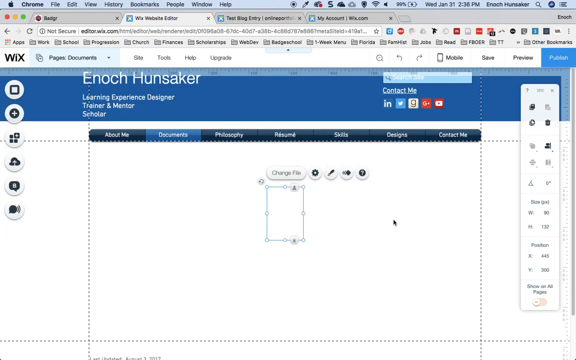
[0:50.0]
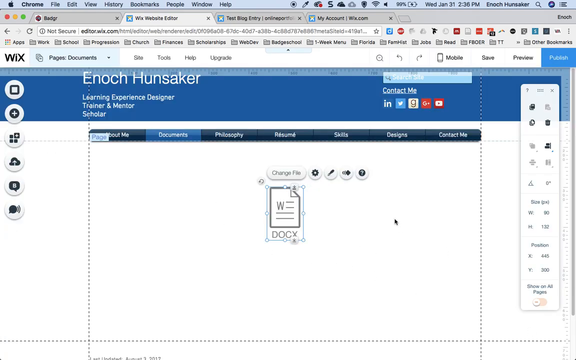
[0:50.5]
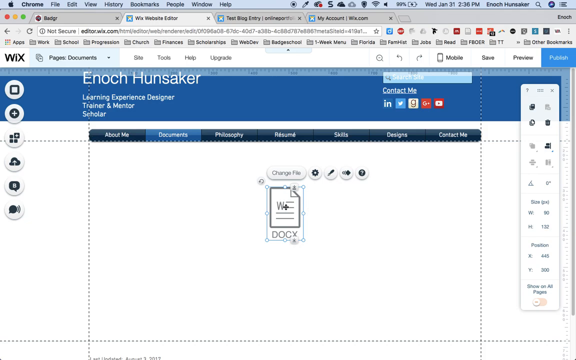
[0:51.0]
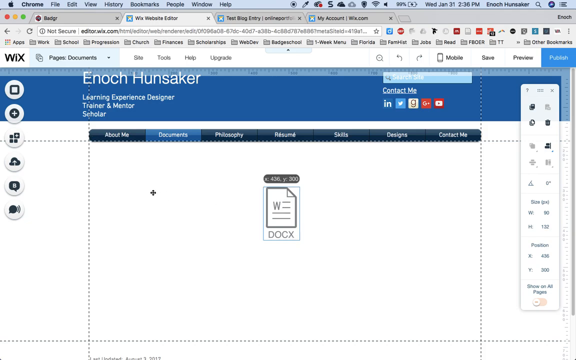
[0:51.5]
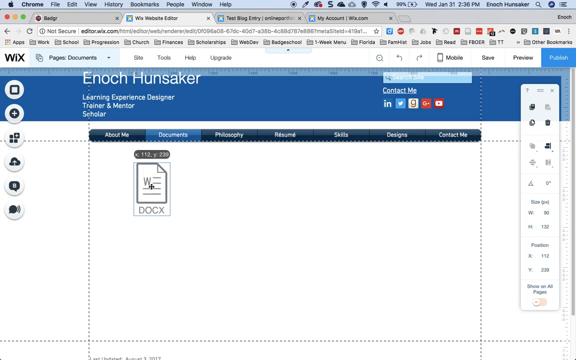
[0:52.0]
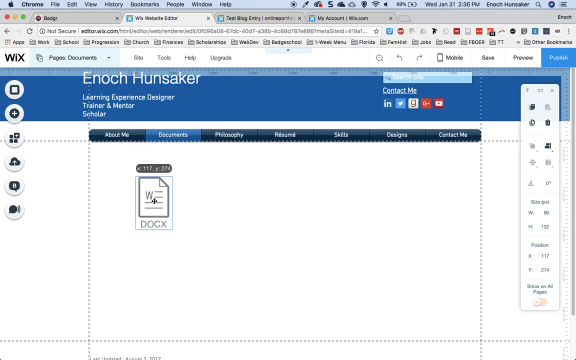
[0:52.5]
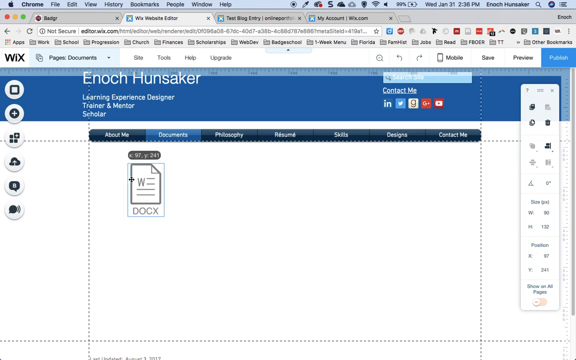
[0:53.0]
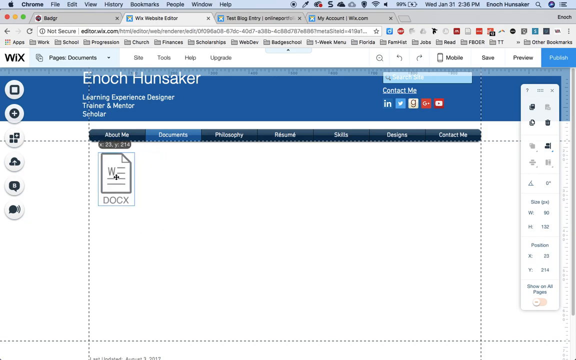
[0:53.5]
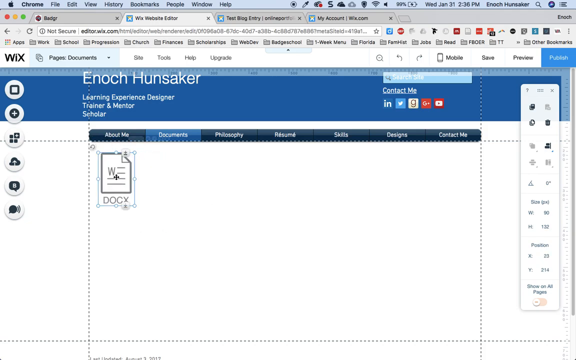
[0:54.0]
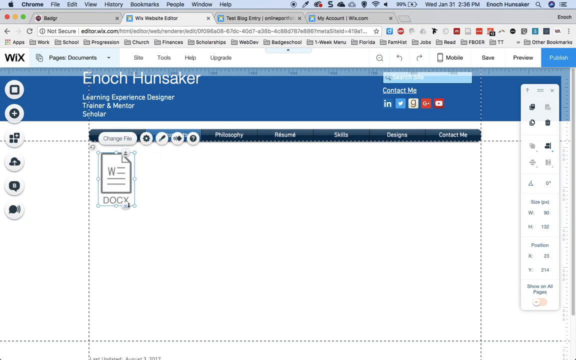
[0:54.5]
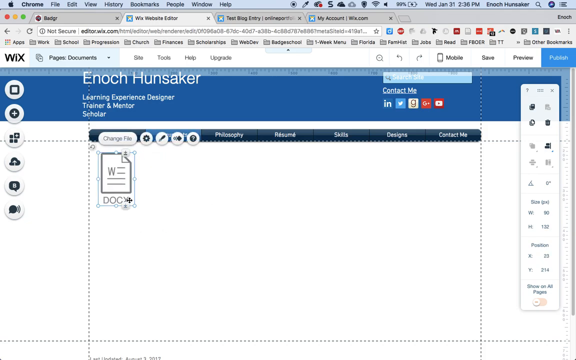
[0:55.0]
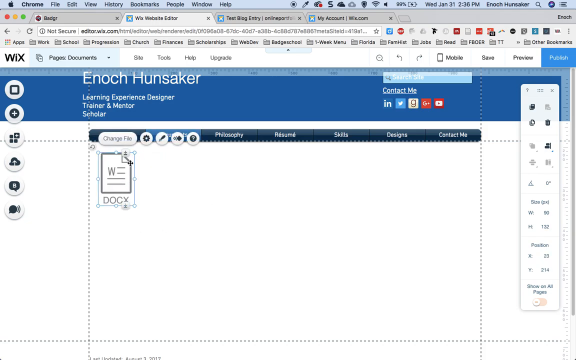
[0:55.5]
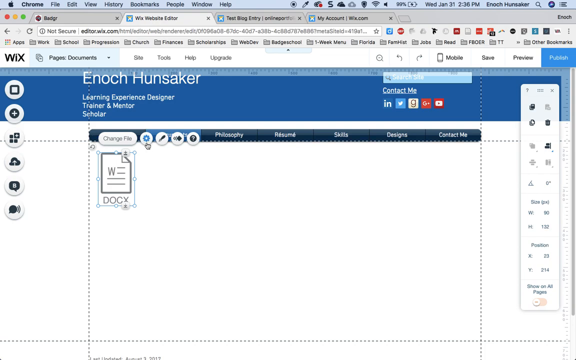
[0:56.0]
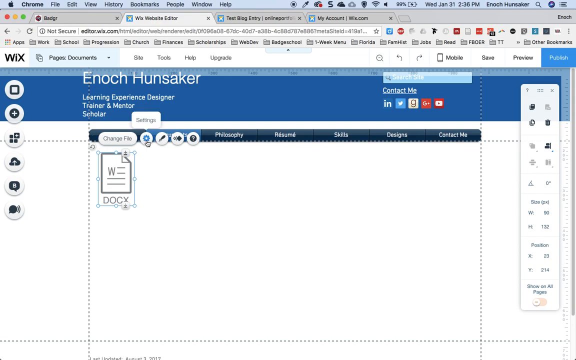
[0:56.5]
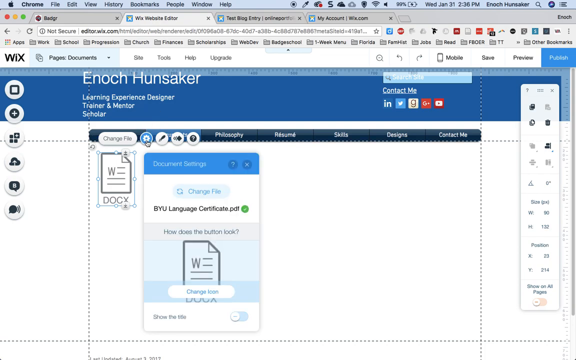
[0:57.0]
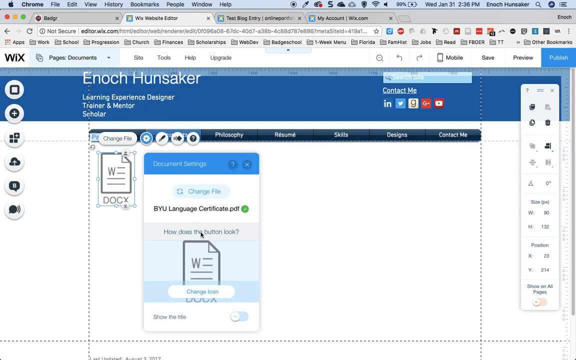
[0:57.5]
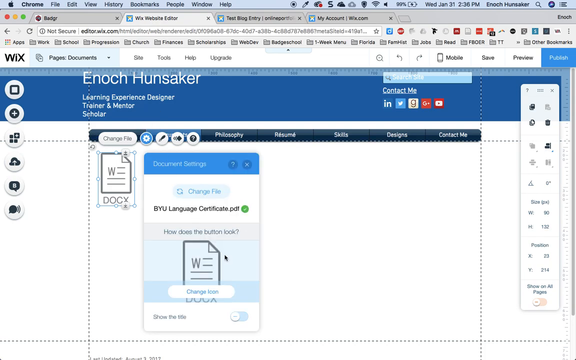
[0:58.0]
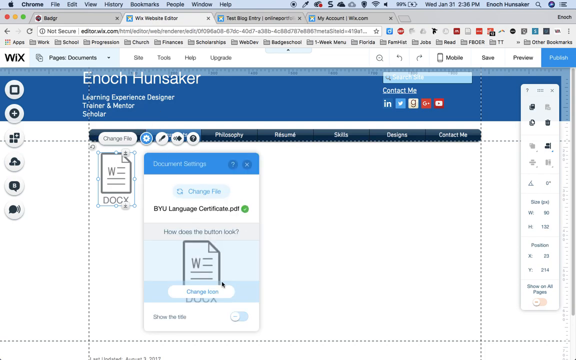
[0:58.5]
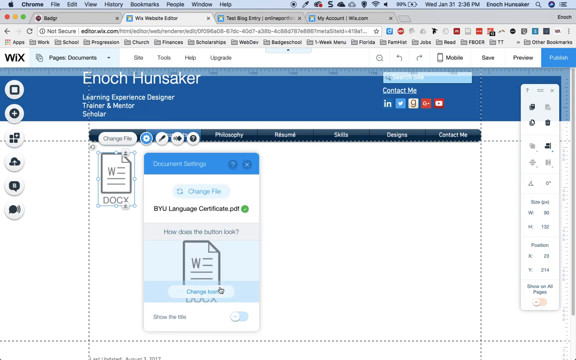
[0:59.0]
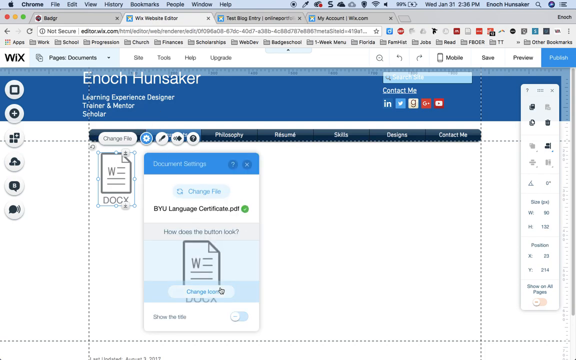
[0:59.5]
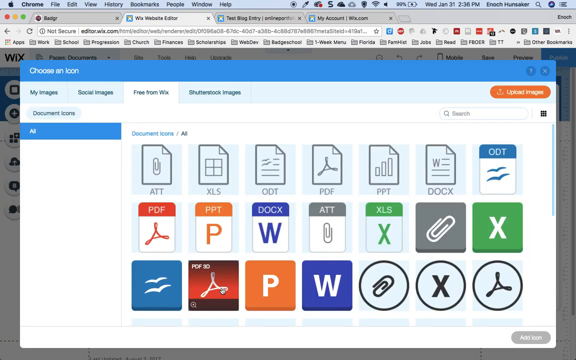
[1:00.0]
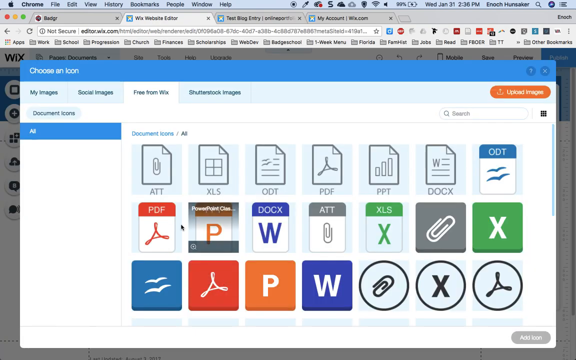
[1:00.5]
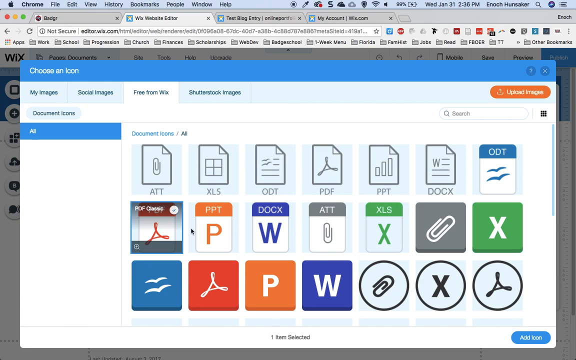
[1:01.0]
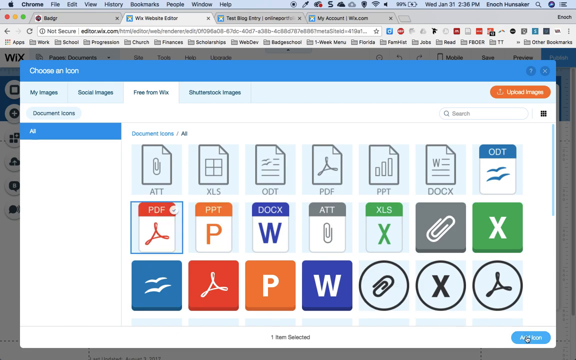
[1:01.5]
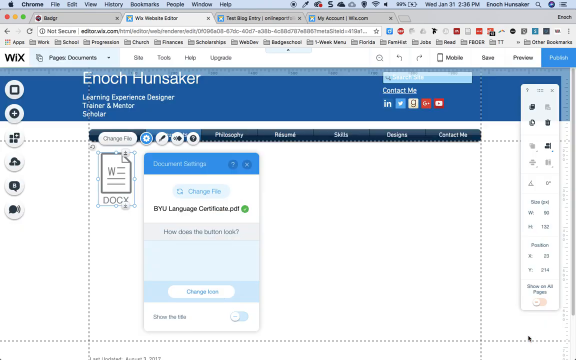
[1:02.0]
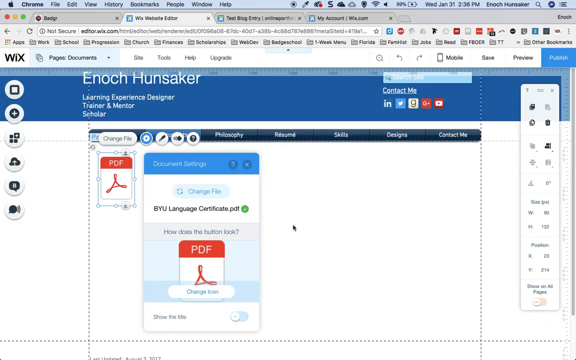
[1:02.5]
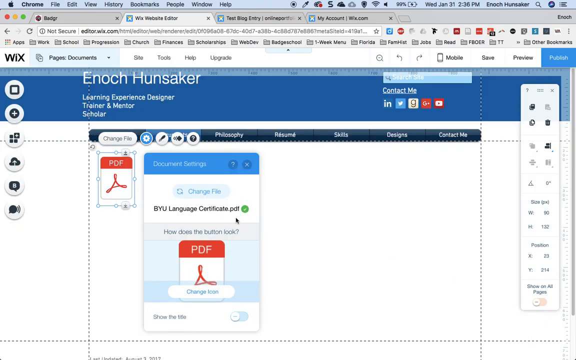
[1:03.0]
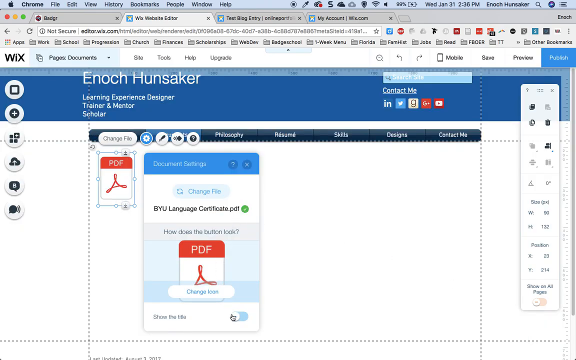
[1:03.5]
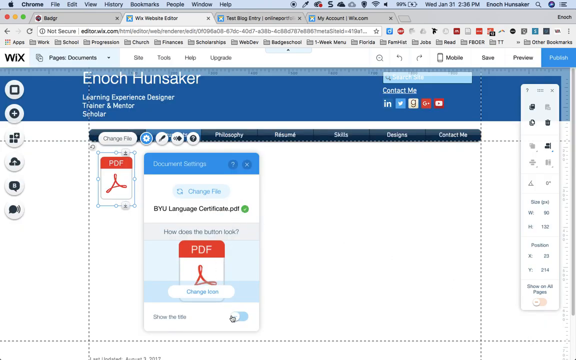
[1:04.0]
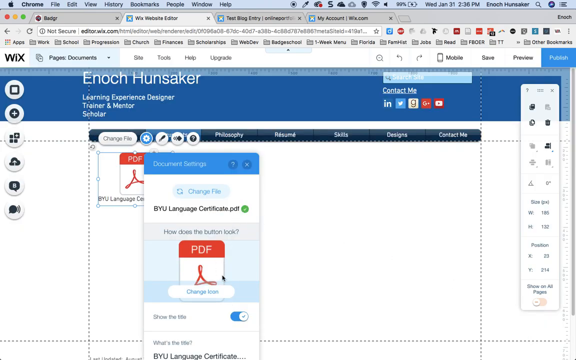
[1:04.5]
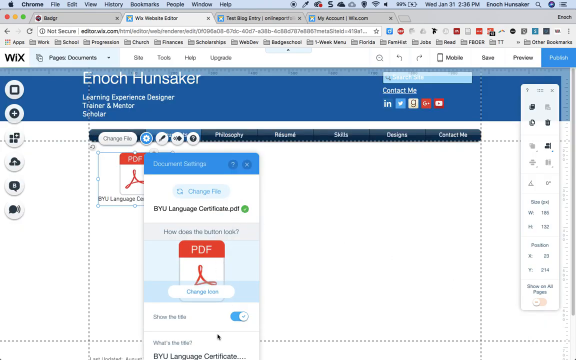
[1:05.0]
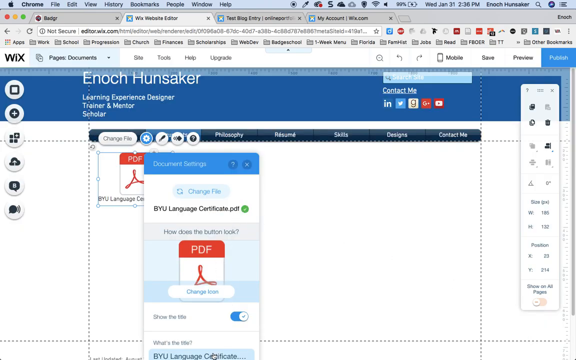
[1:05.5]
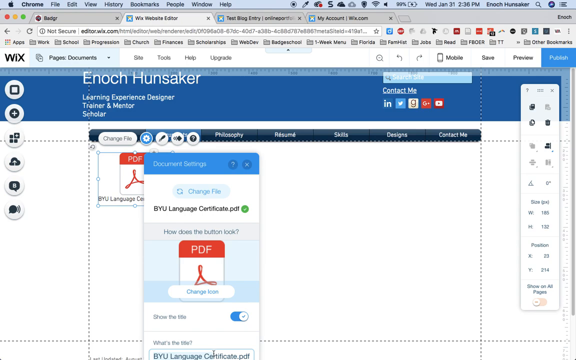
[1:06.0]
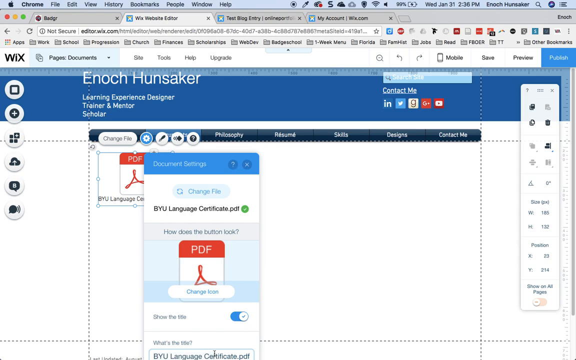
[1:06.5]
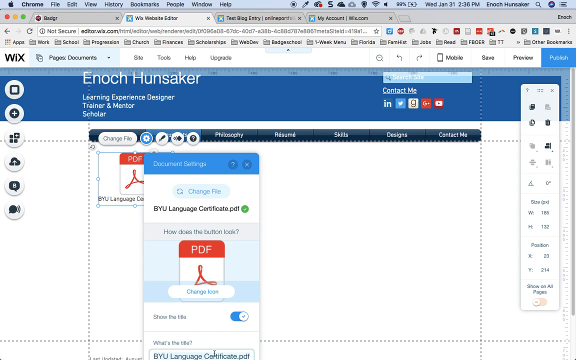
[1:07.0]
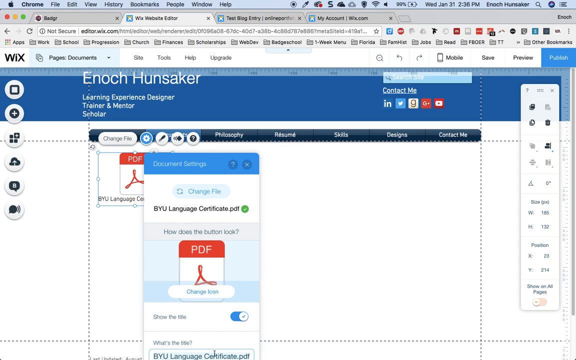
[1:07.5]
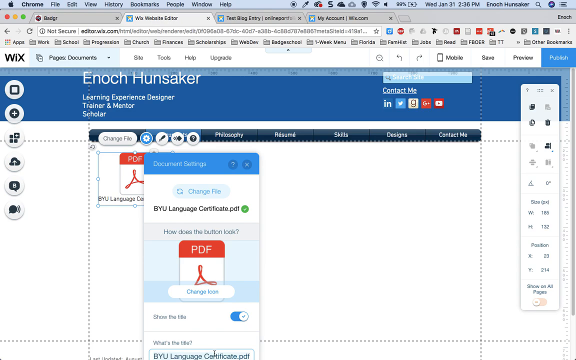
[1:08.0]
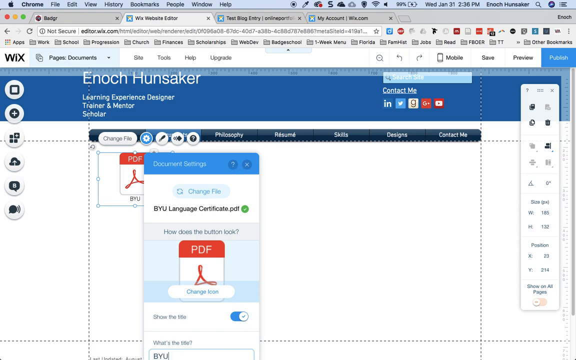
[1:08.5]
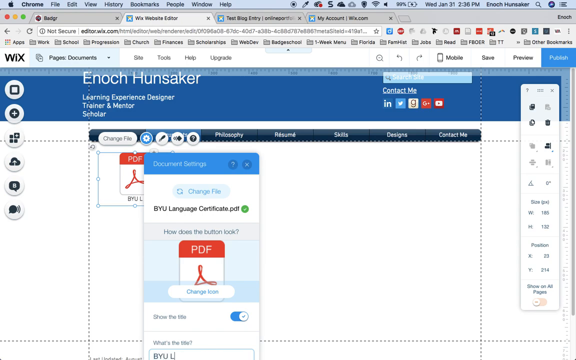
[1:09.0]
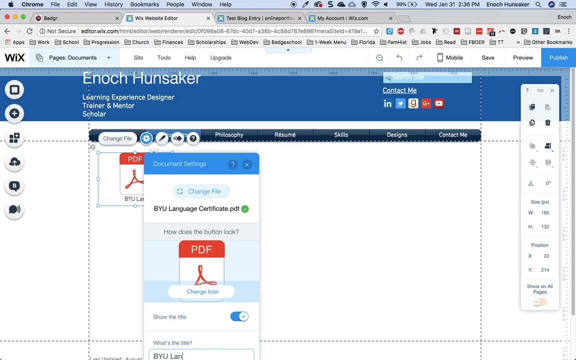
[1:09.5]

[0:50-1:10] A computer window shows "Enoch Hunsaker" at the top in blue, and below that "learning experience, designer, trainer, and mentor, scholar". Below are about four tabs, reading from left to right "about me", "documents", "photography", "resume", "skills", "designs" and "contact me". Below that is a white screen with a blue box on it. At the top of the blue box it says "change files", and to the right are a gear icon, a baseball bat icon, a bony fish icon, and a circle with a question mark in it. A piece of paper with the letter W and some lines for writing appears, and below it says "DocX". The mouse moves this around, moving it to the top left corner. It clicks on the gear icon and the same thing appears. It clicks change something, a bunch of icons appear, and then a PDF appears on the page. It then starts labeling this, but the label cannot be made out because it is hidden behind the PDF page.